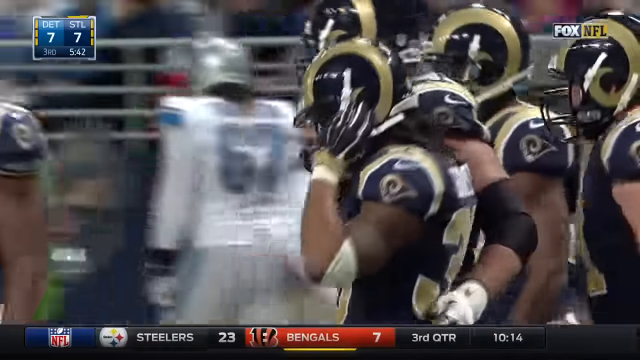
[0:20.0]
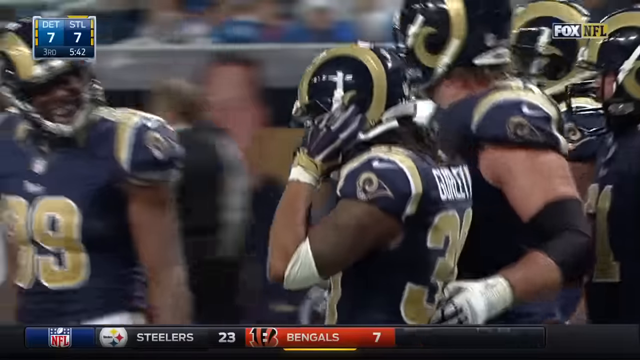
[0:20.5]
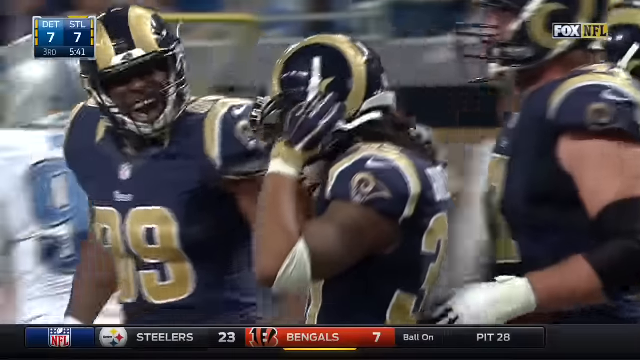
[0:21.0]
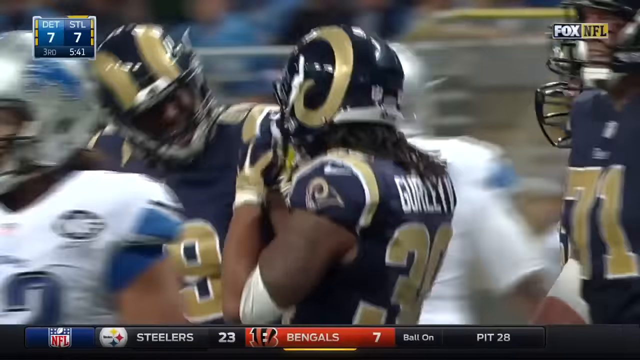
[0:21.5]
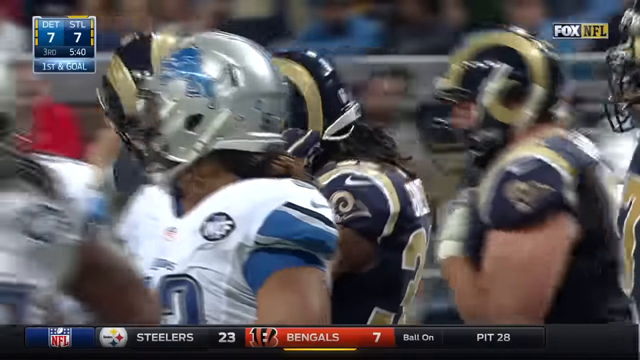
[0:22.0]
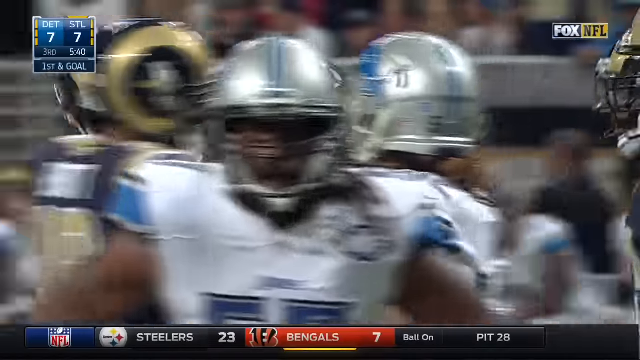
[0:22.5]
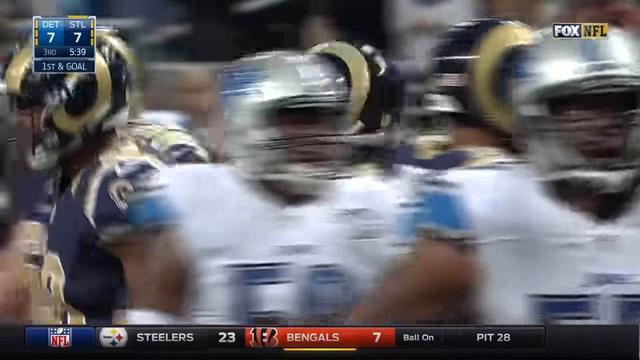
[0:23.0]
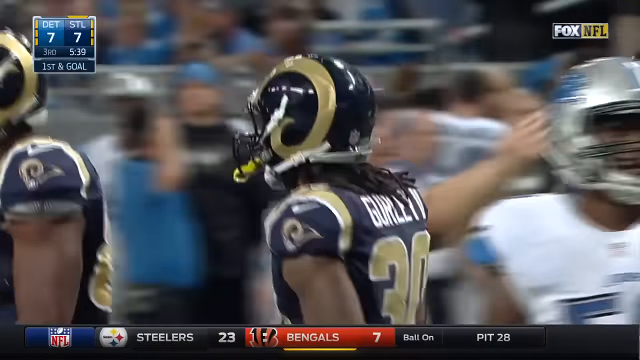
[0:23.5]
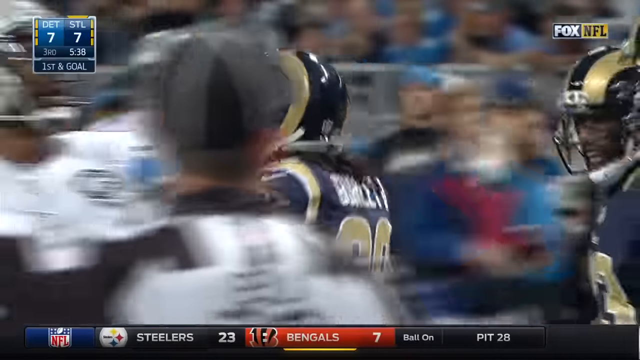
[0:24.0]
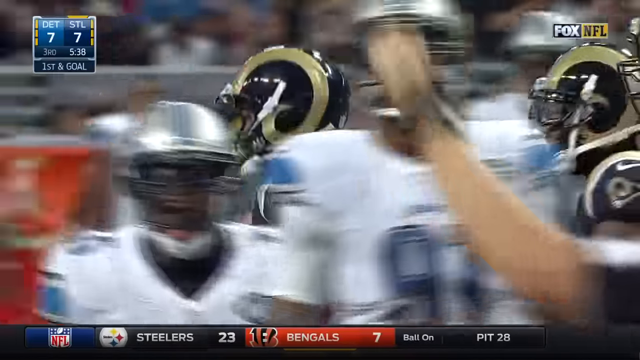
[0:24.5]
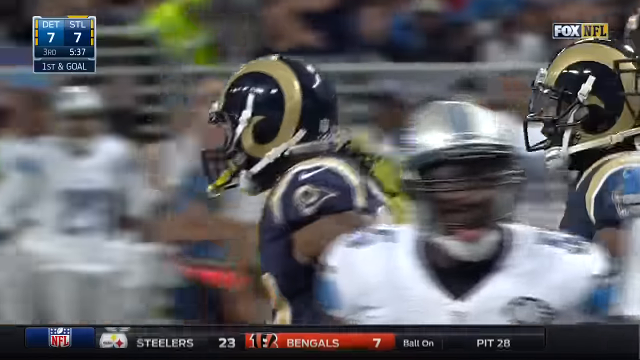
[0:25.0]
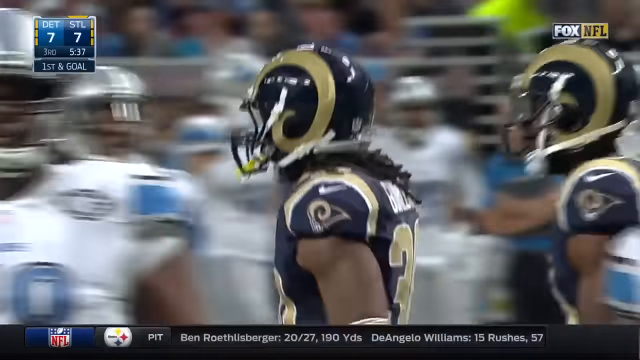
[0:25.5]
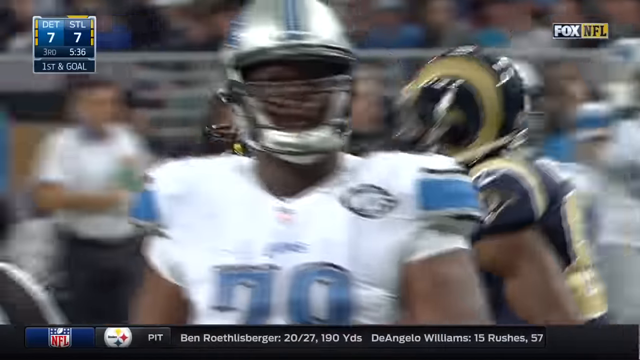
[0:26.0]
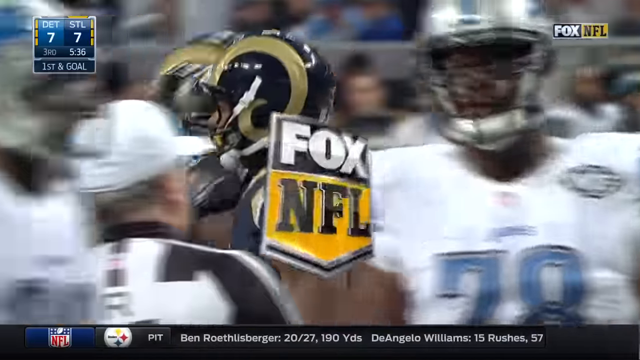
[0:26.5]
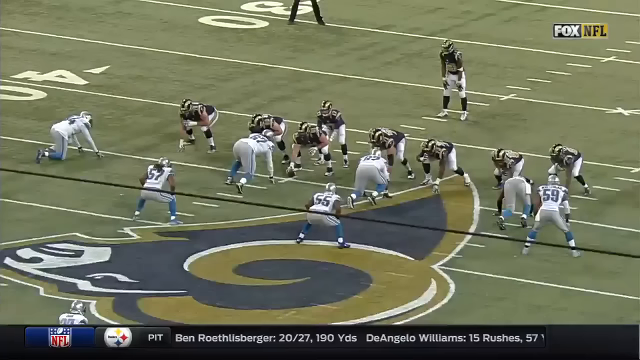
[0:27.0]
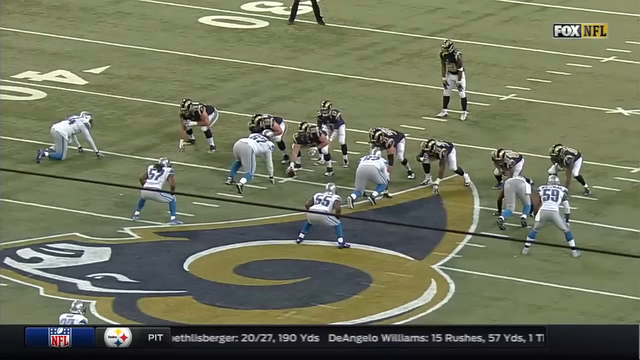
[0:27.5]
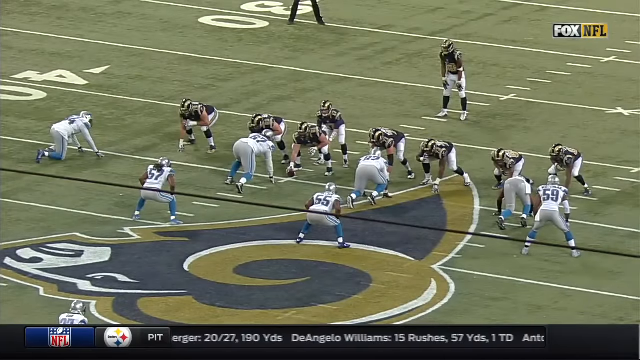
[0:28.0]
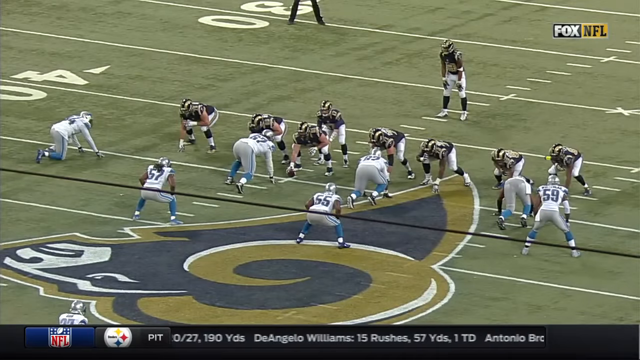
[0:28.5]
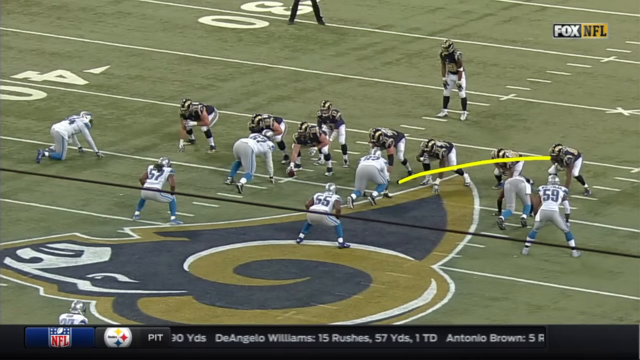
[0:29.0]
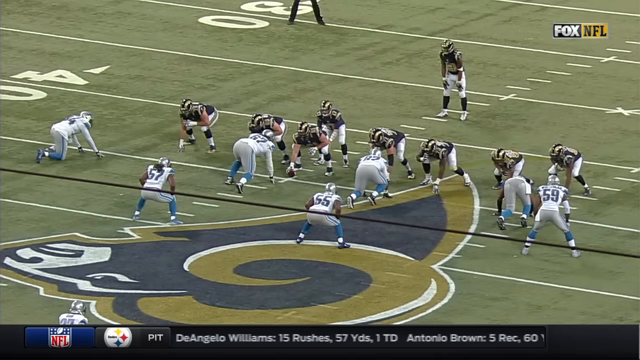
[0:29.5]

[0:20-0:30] After scoring a touchdown for his team, the player walks back, and the camera tracks him all the way. A replay then shows the team's setup before the play, with a yellow line drawn from the player who receives the pass-off to one of the players on the other team. On closer inspection, the team's uniform is gold and navy blue rather than black and white: the tops are navy blue and gold, and they wear white leggings.